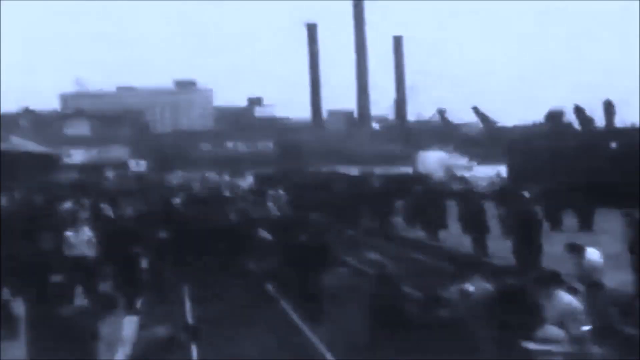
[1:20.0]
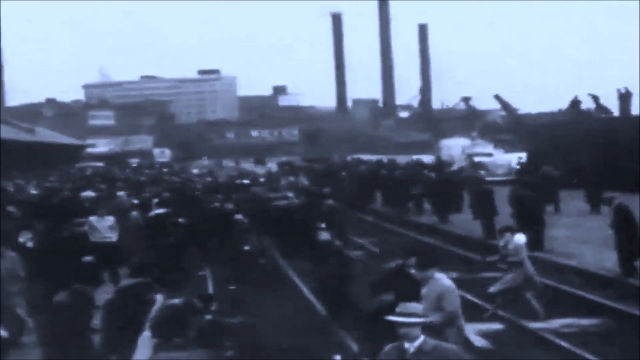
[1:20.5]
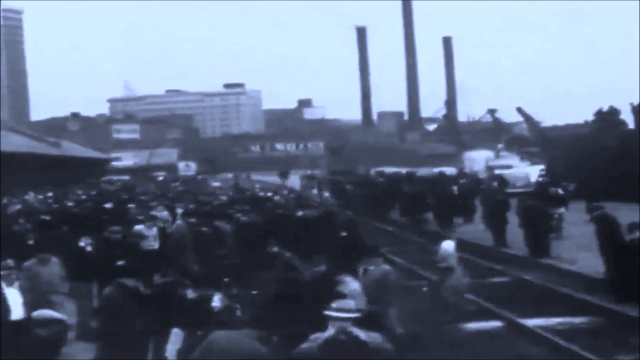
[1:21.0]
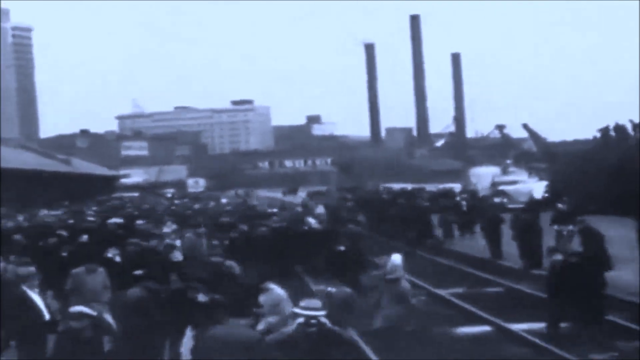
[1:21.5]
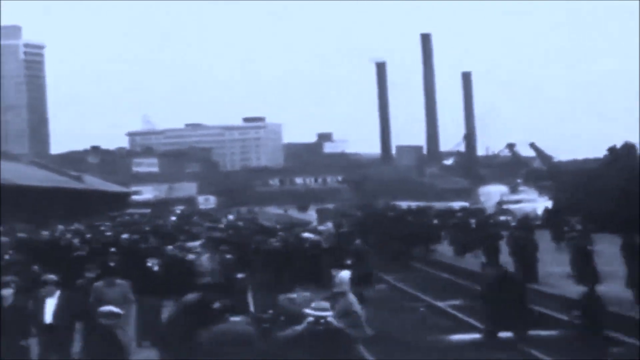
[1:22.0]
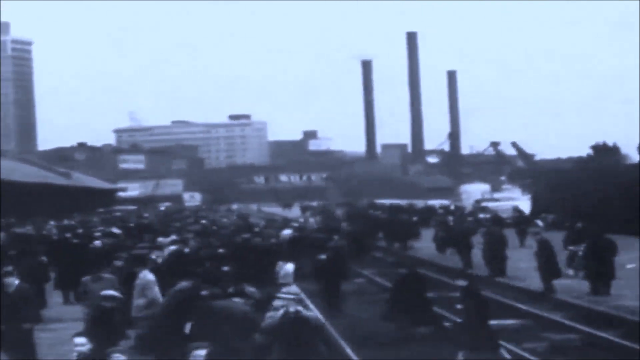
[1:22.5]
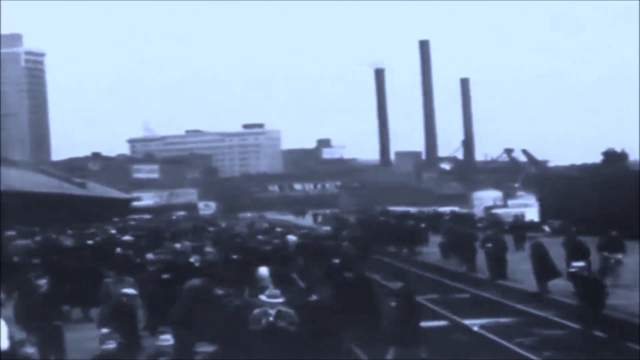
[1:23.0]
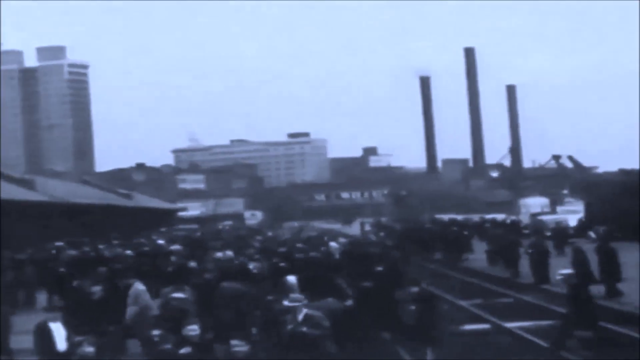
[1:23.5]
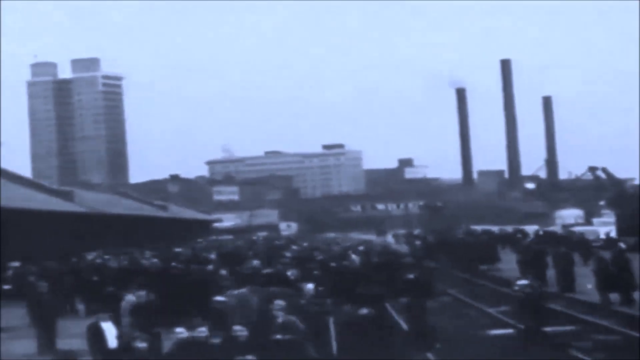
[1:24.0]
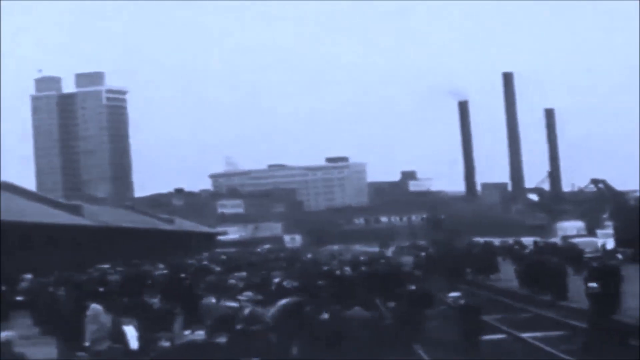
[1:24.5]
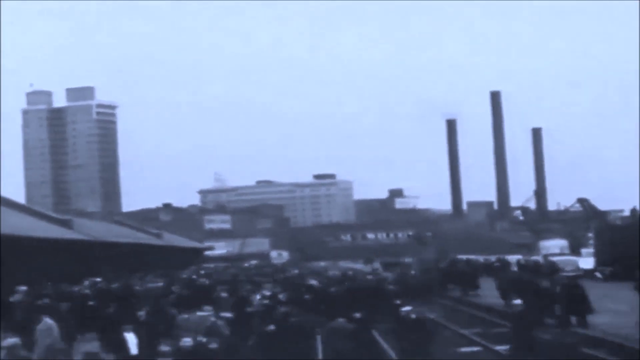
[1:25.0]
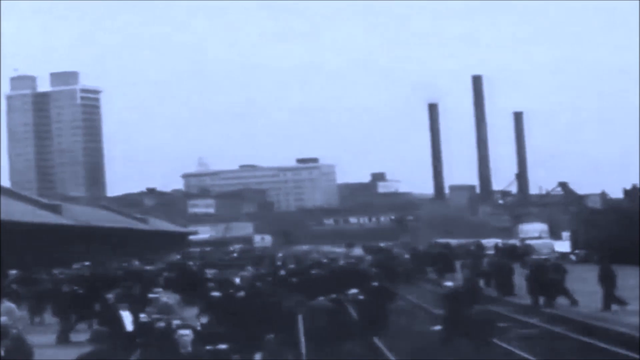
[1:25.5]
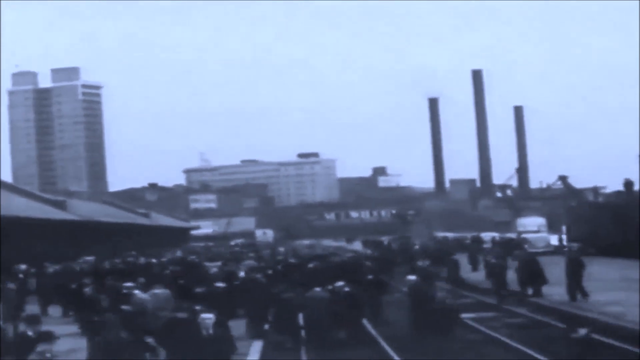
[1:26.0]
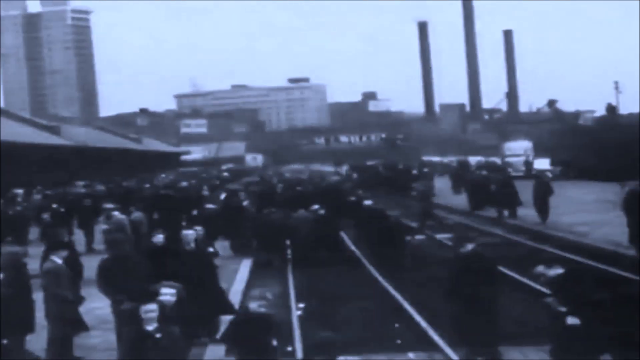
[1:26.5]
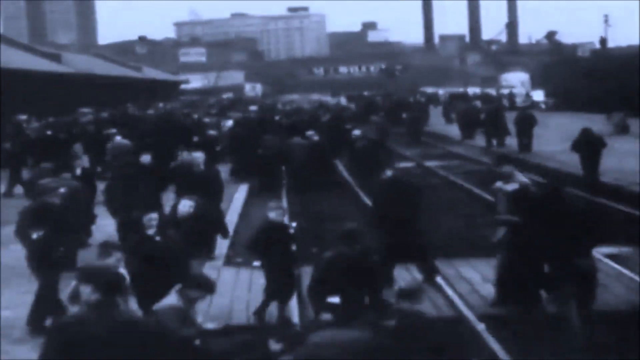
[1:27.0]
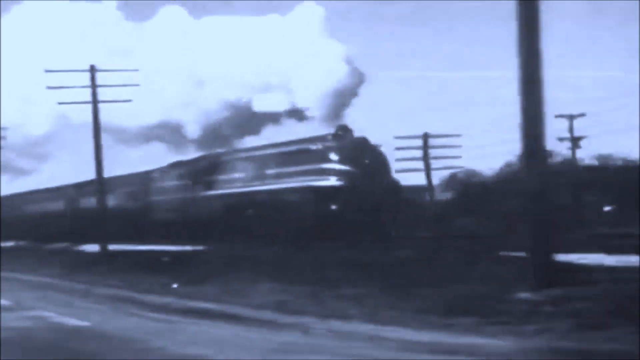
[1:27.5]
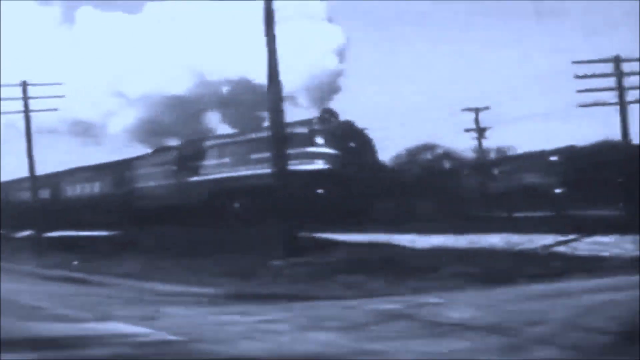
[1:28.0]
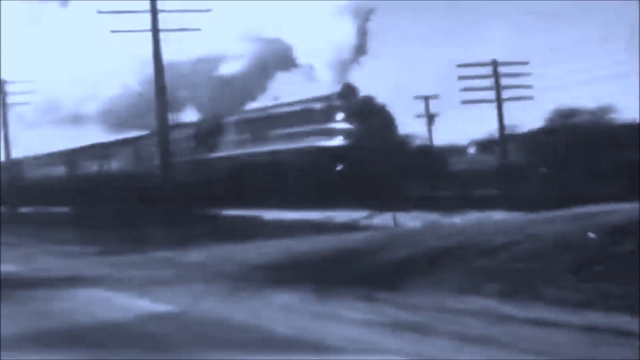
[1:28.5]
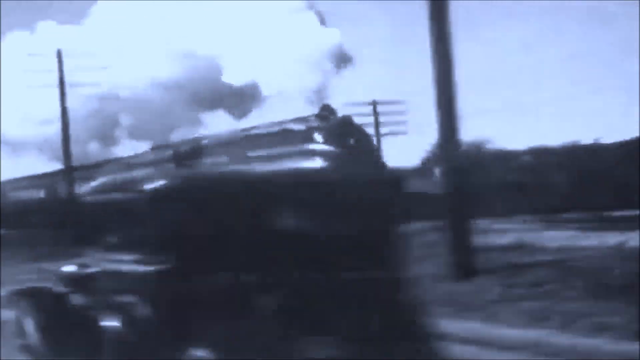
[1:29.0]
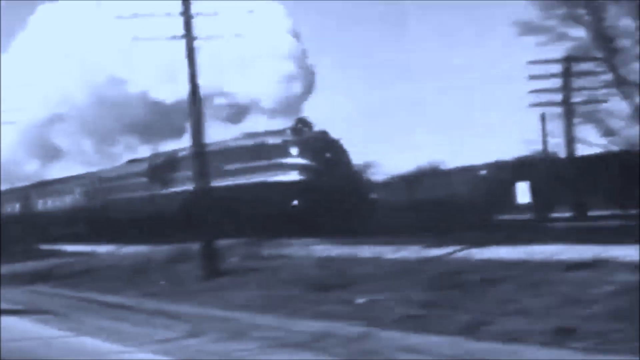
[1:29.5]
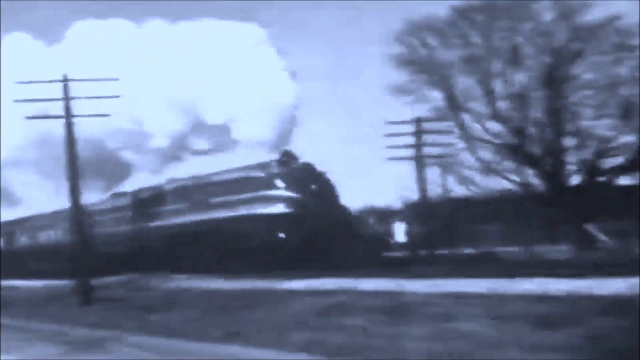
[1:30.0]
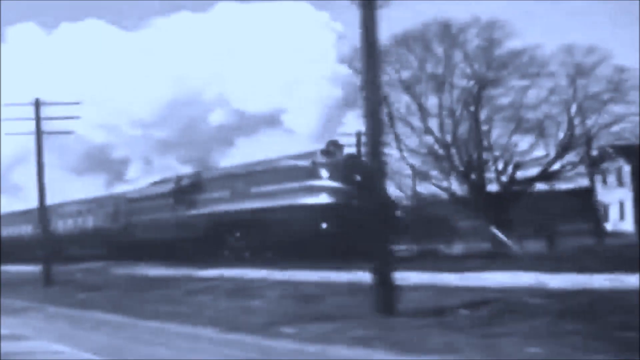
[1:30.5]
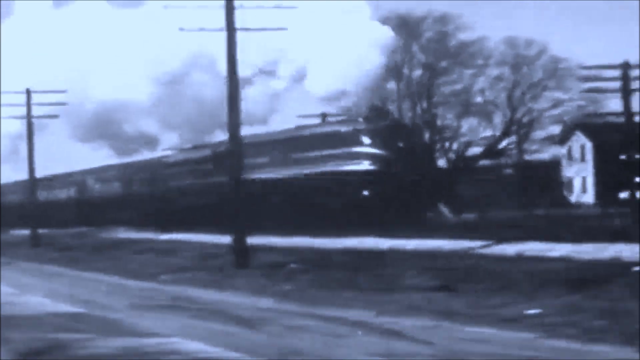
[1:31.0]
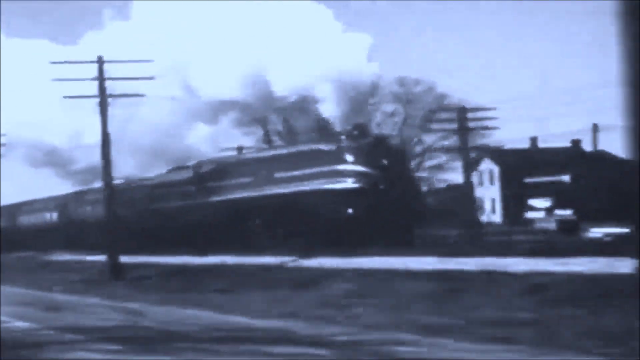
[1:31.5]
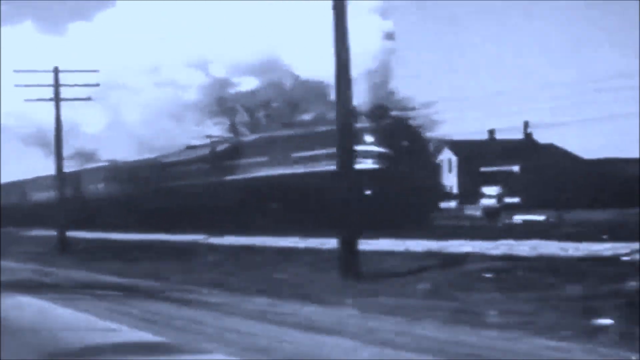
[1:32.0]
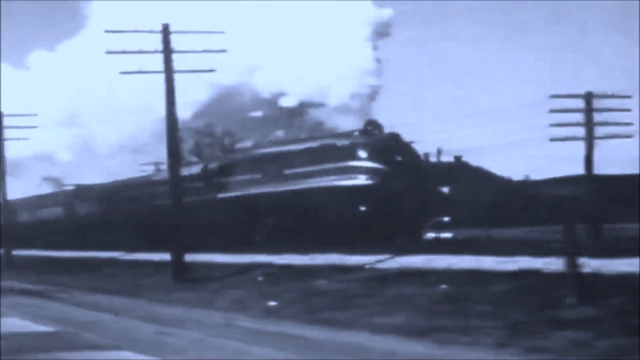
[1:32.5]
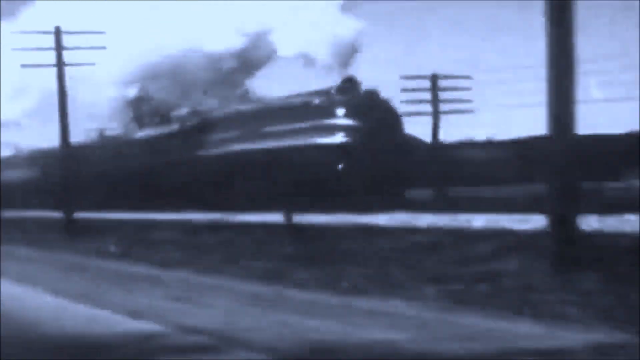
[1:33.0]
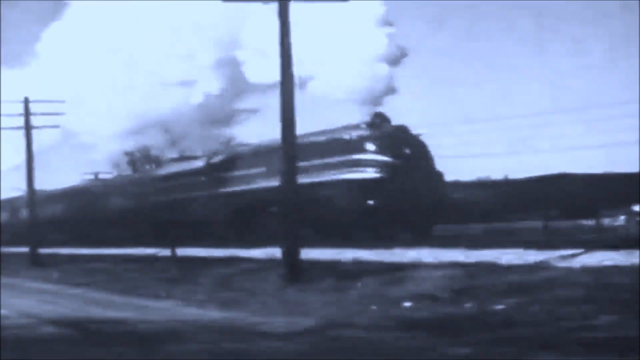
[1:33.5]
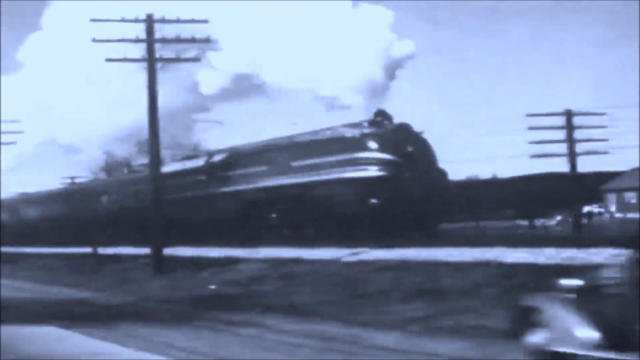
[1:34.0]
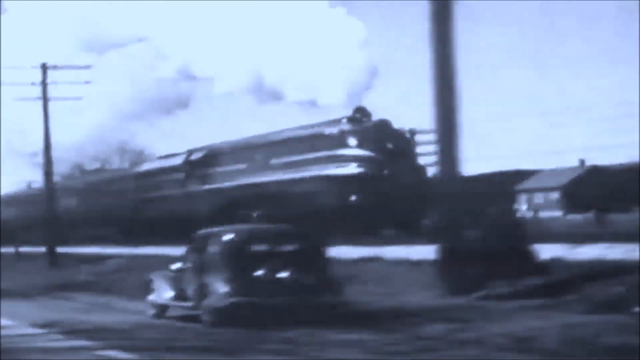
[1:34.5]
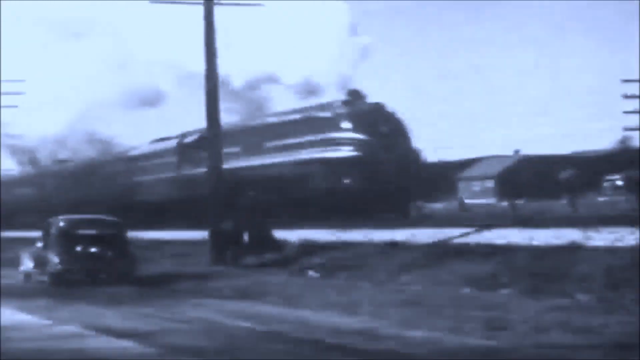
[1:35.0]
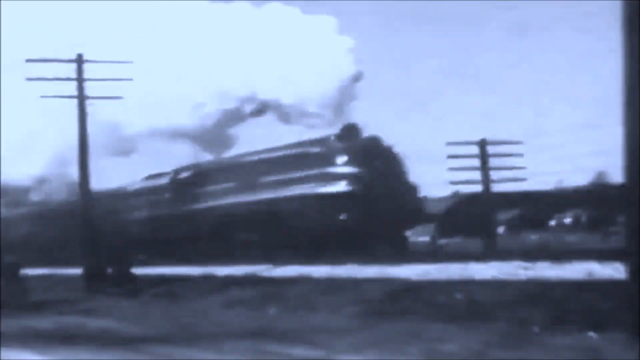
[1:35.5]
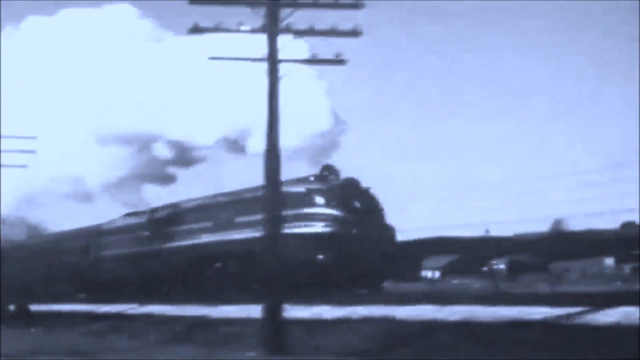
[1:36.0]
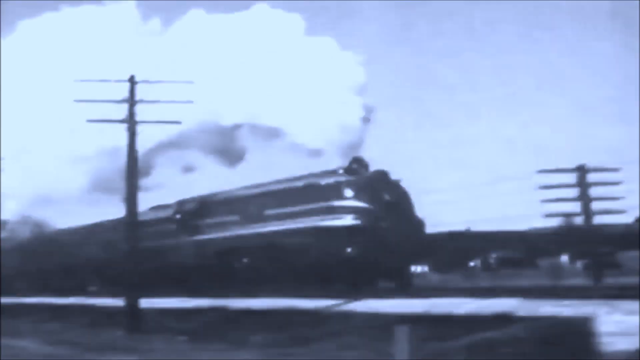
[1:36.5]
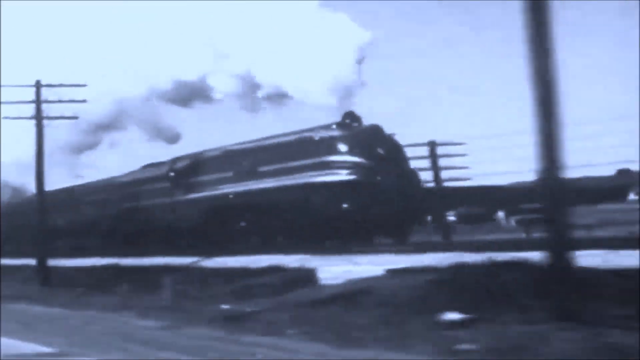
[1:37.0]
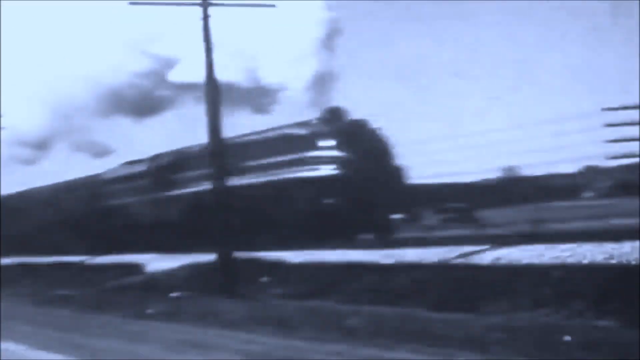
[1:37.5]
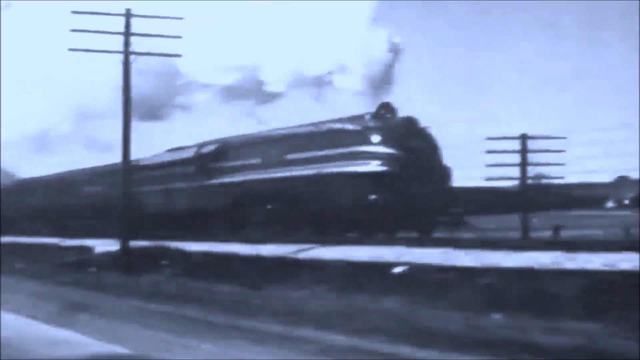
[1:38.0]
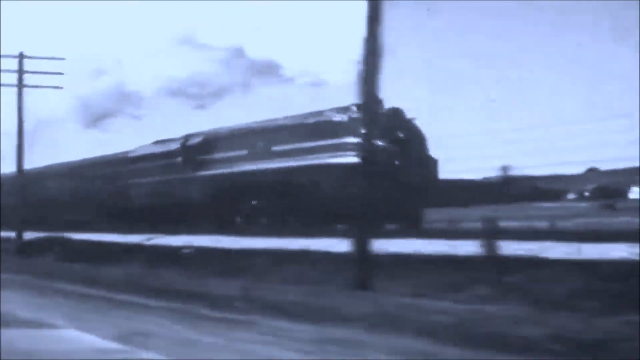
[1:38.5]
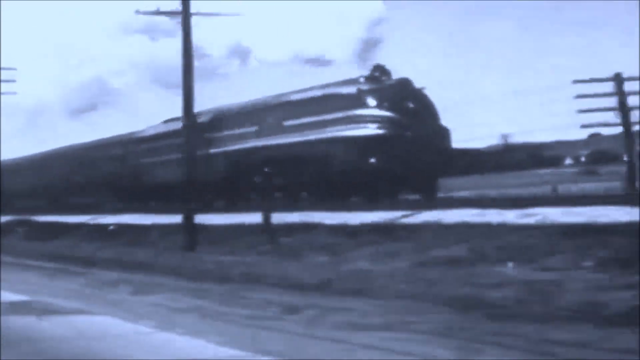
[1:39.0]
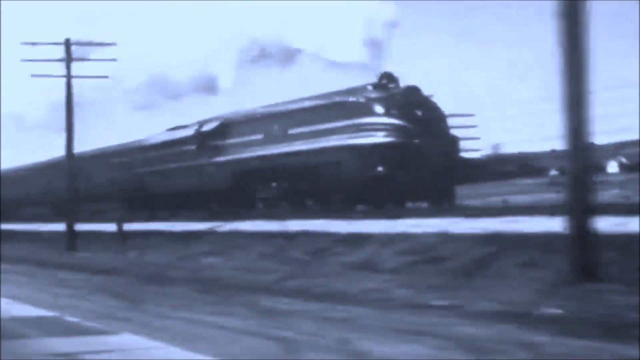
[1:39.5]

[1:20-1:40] The camera continues to pan backwards, and people at the station cross the platforms. The platform and the railroad tracks are at the same level, so people cross the tracks, probably heading home. The background is more visible: an industrial area where one building has three tall factory smokestacks, and a large white building stands in the background. As the camera pans back further, the people are no longer waving; they do not notice the camera and go about their business, walking across the tracks. The scene then switches to the train moving through what appears to be a residential area, smoke coming from its smokestack. Right next to the train is a road where an occasional older car, like a Model T or Model A, drives by. There are power lines.